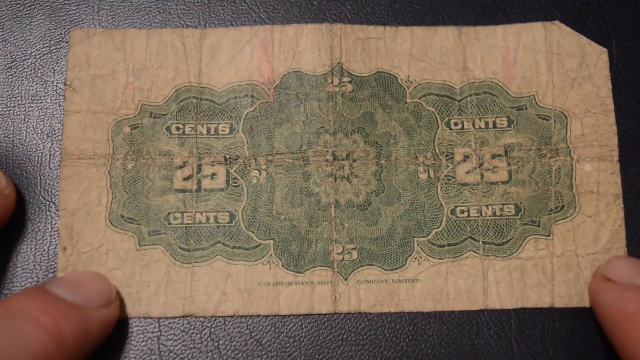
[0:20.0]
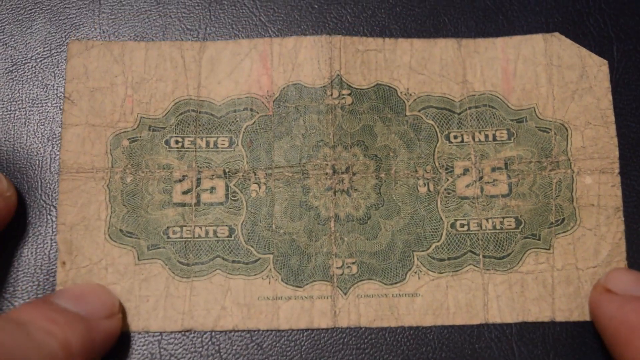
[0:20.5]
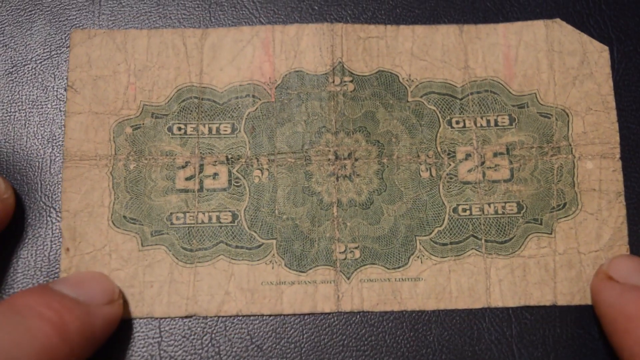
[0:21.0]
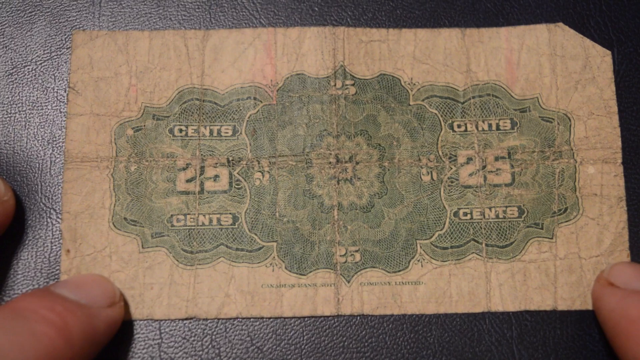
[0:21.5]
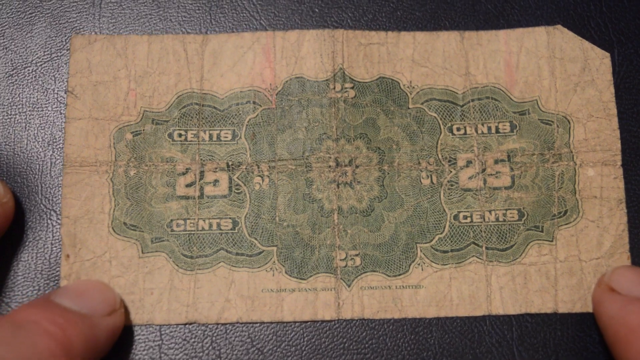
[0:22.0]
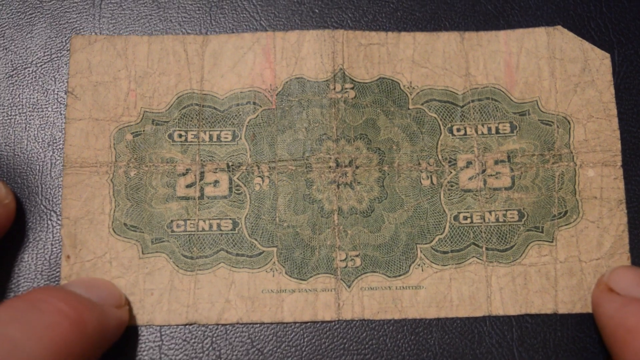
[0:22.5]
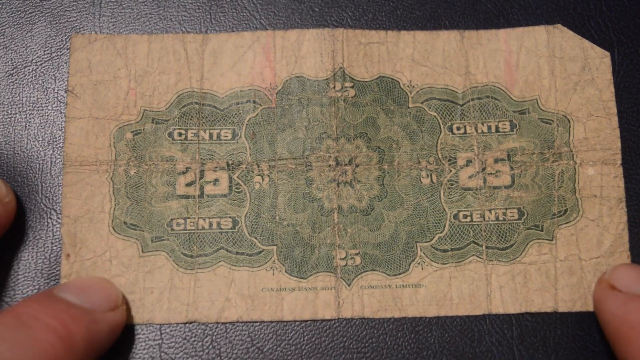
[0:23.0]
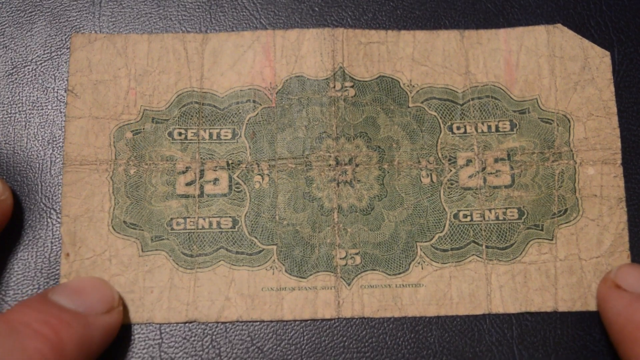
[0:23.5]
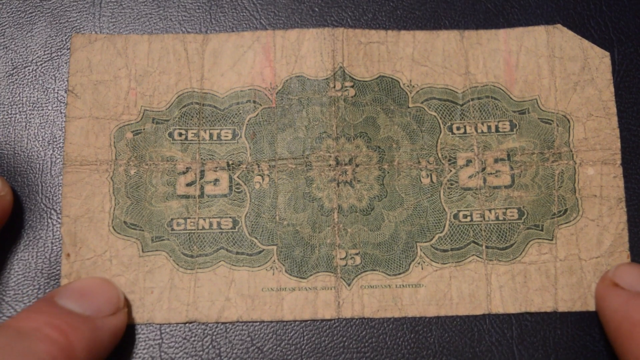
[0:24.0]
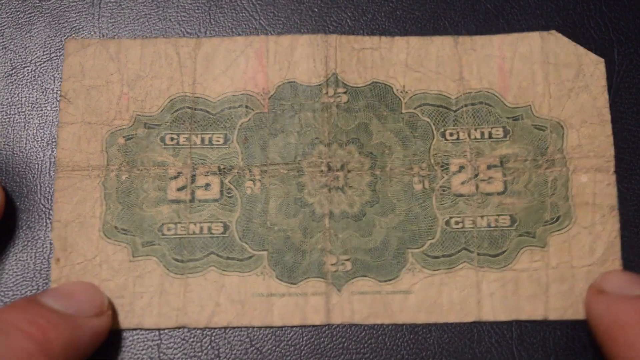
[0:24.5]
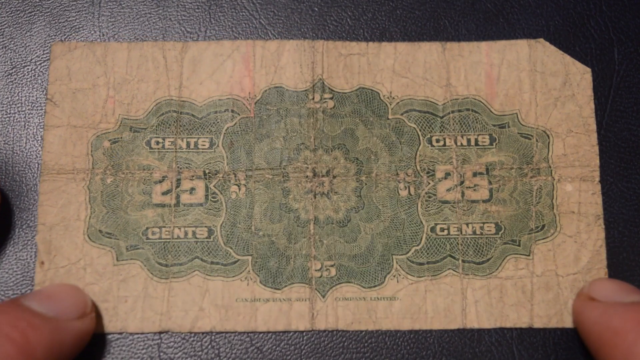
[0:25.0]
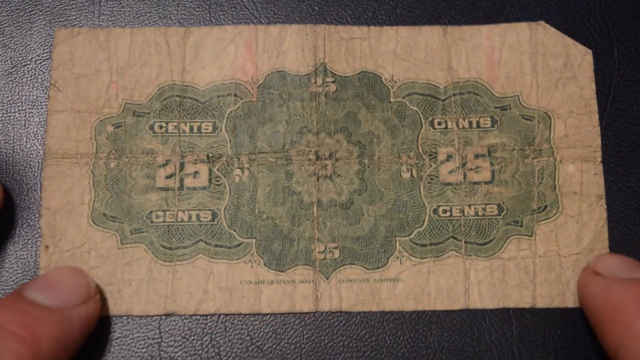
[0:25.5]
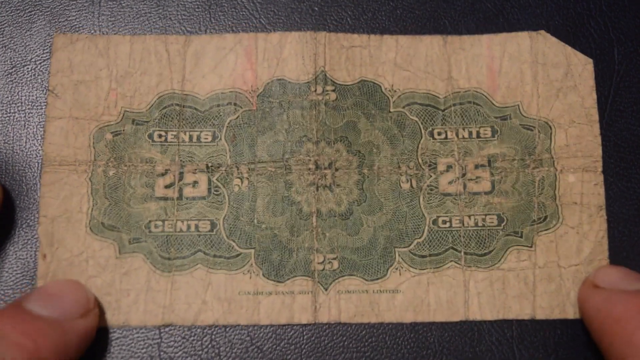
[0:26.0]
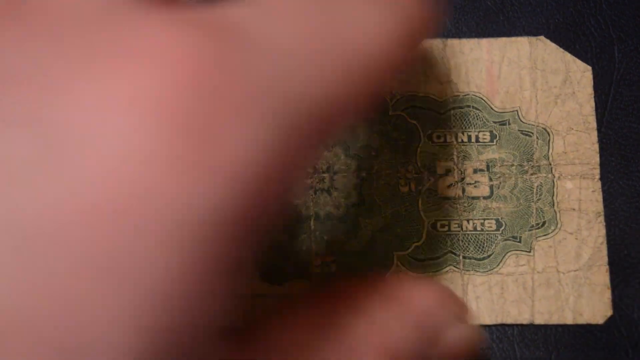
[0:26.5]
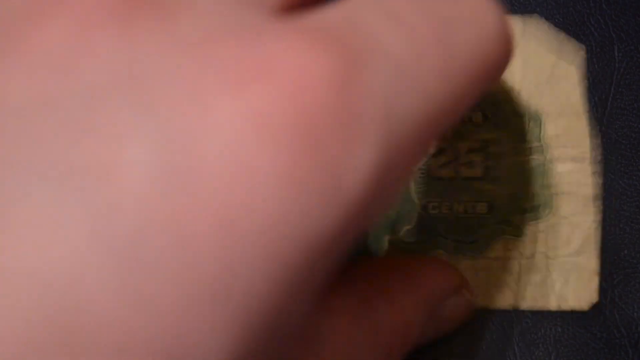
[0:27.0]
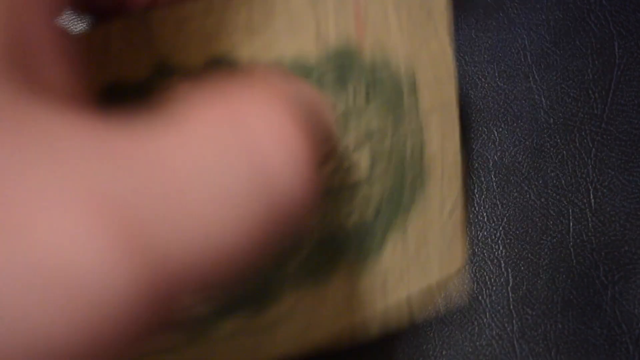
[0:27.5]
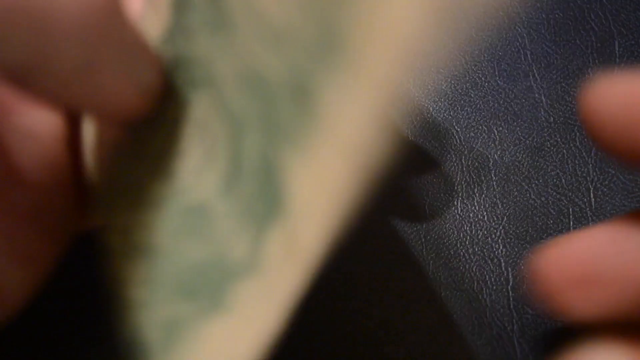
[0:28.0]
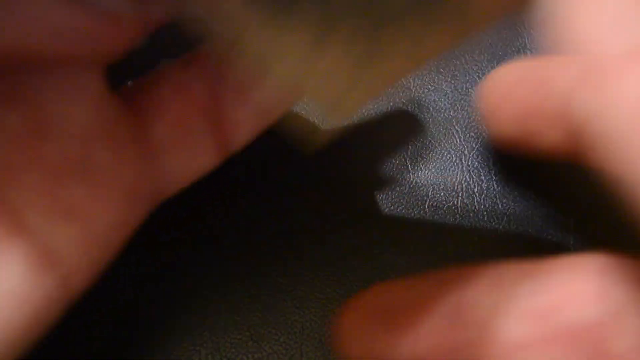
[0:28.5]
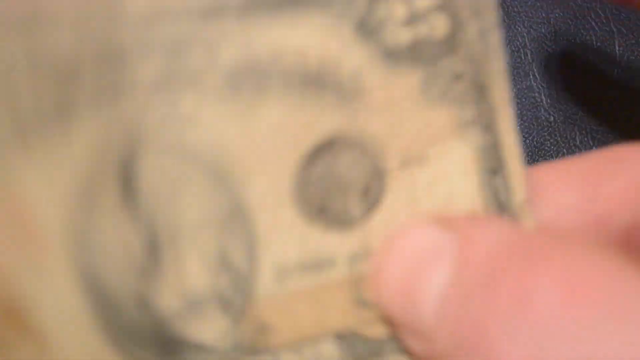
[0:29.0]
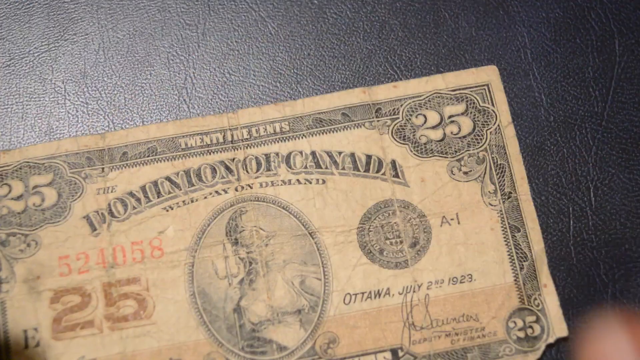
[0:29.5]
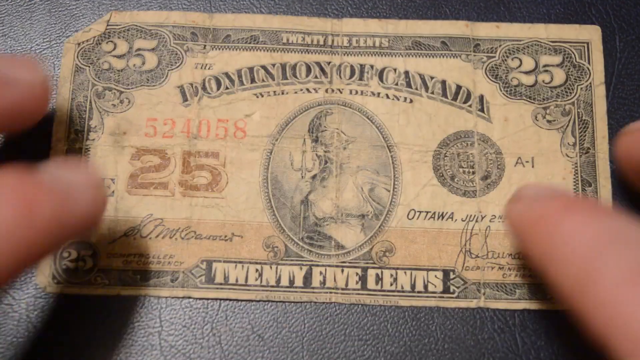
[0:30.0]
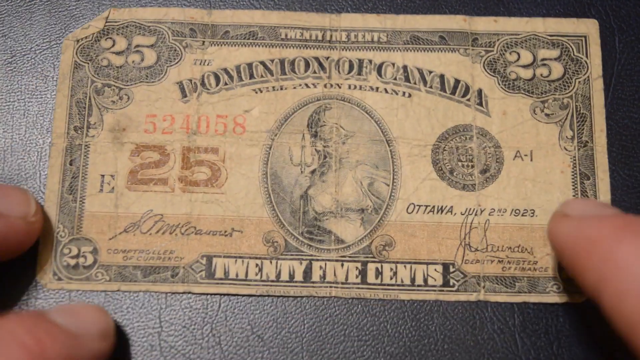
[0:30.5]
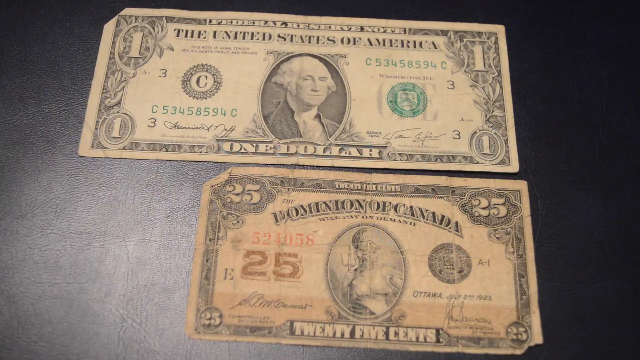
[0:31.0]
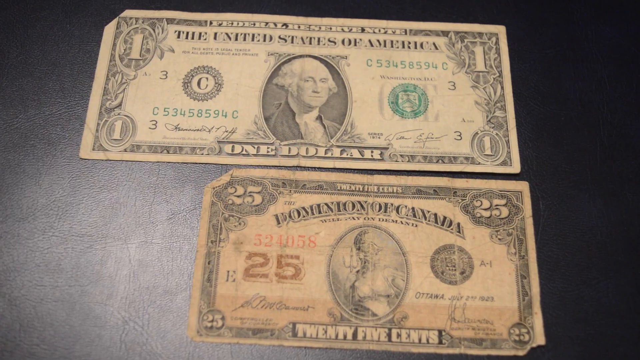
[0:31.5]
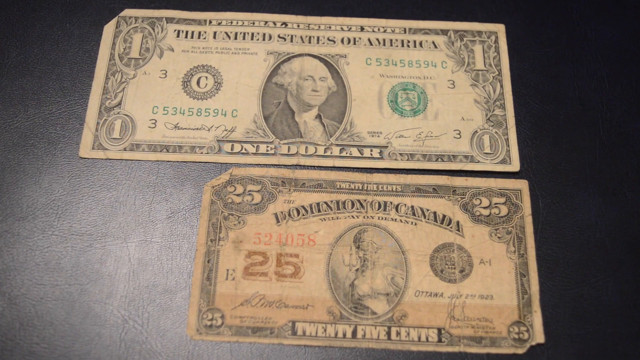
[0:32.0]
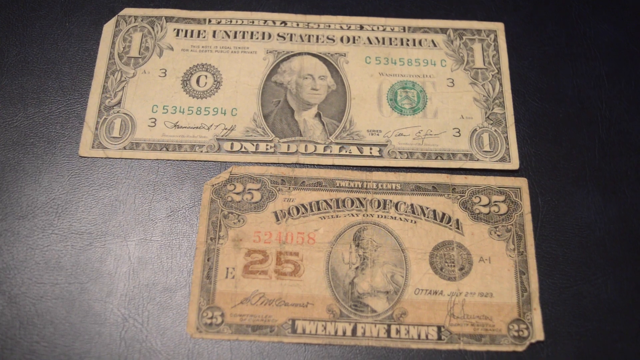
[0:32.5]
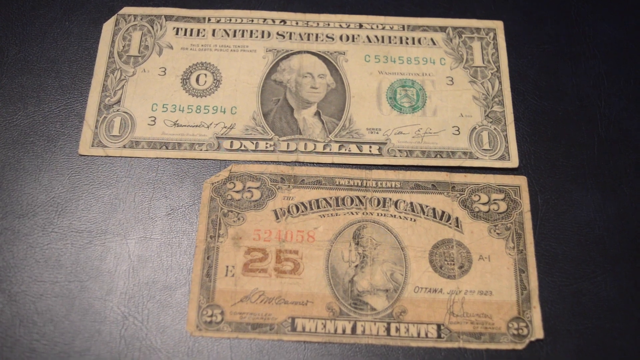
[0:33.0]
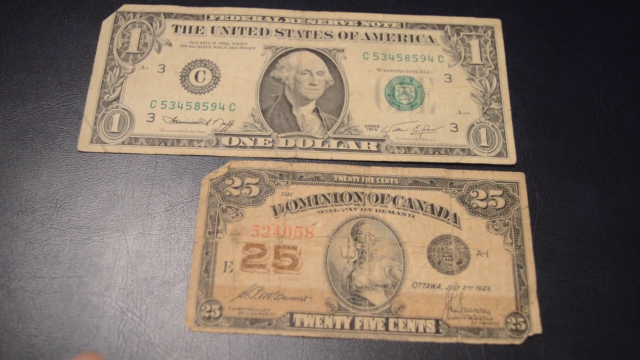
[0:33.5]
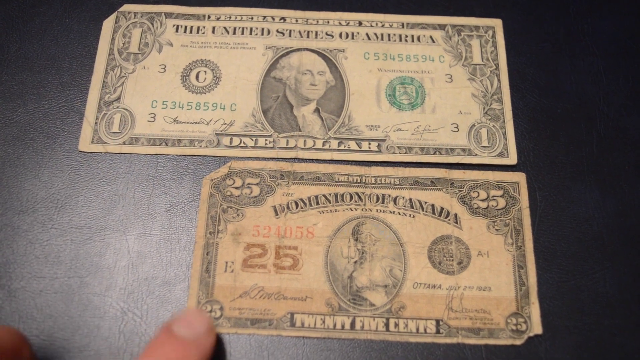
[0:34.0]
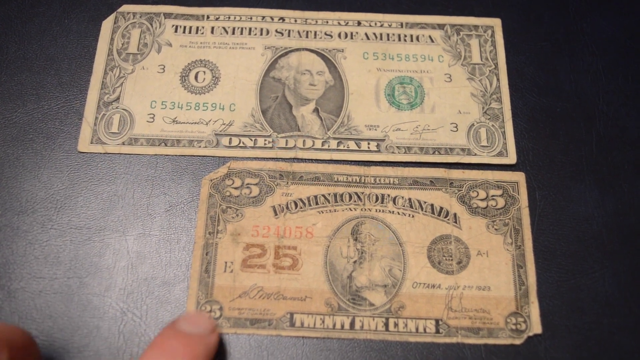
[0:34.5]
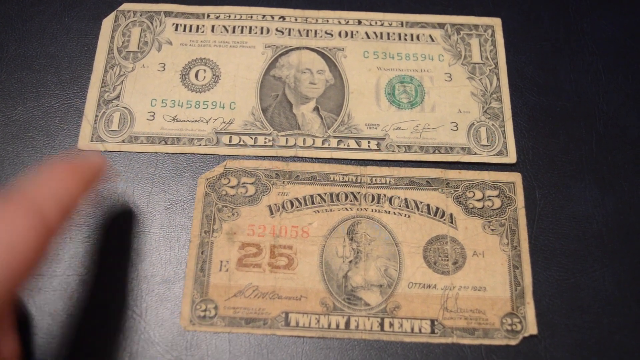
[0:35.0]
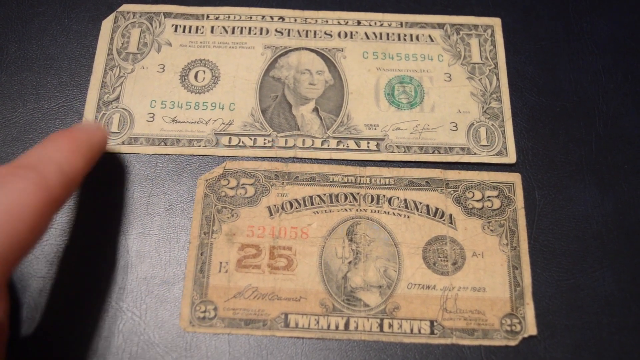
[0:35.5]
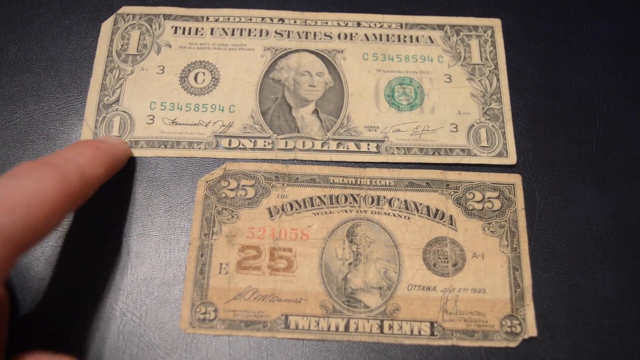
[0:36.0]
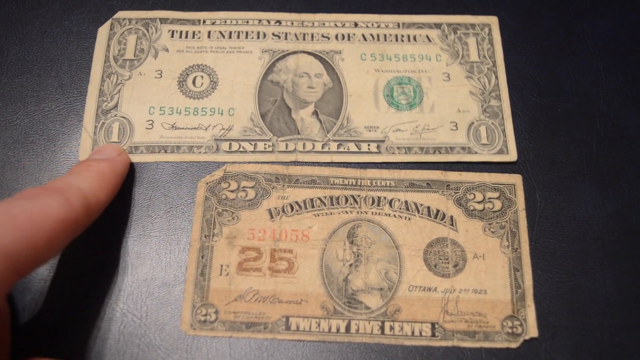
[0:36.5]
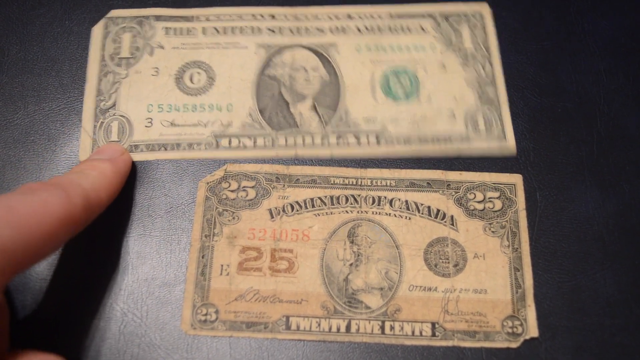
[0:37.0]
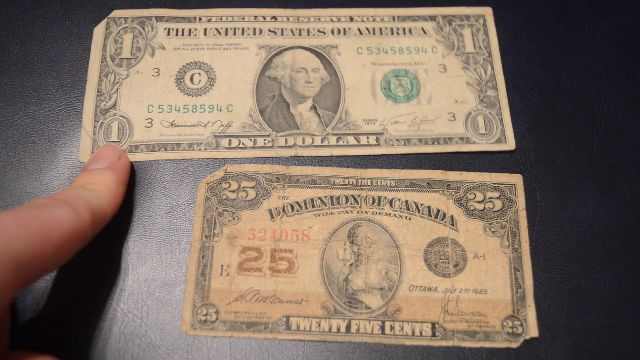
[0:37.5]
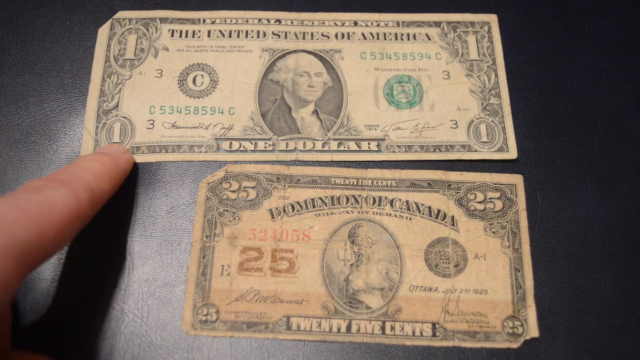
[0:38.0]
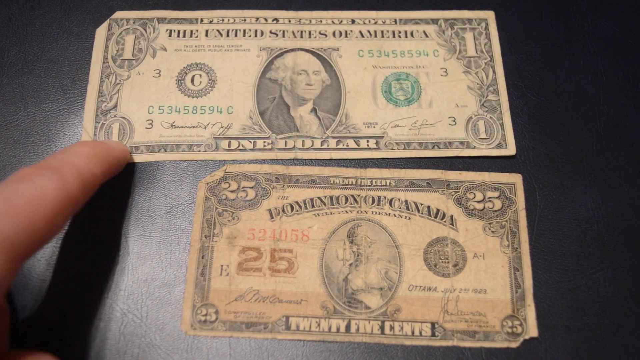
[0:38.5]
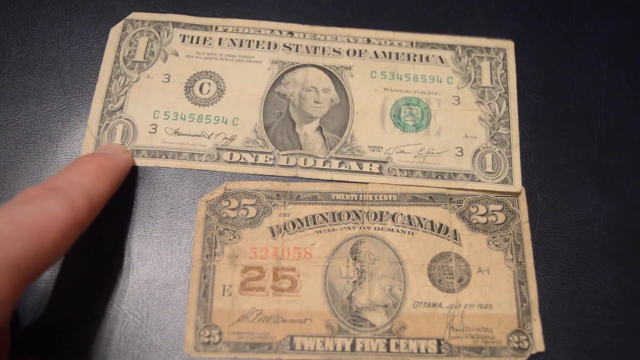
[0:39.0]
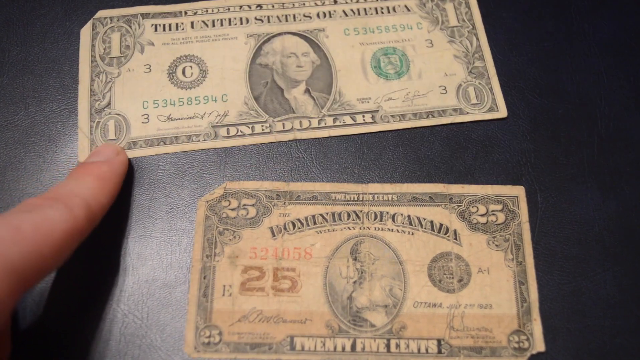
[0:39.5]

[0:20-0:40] The bill is now shown from the back. A flower-like structure, round with petals and blooming, takes up the whole middle of the bill. The bill says "25 cents," and "cents" appears four times. The number 25 is on the top and on the bottom, in the upper left, lower left, upper right and lower right corners.